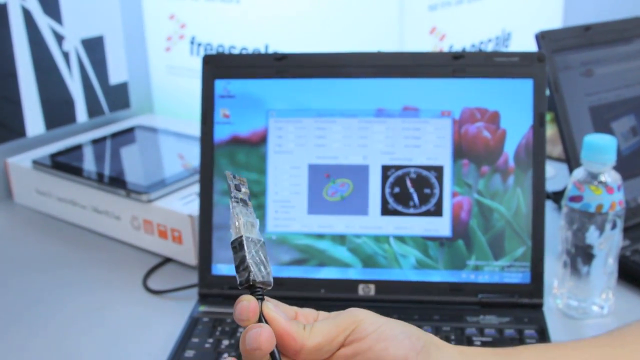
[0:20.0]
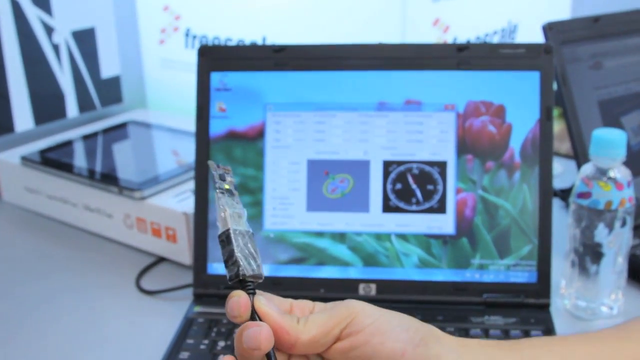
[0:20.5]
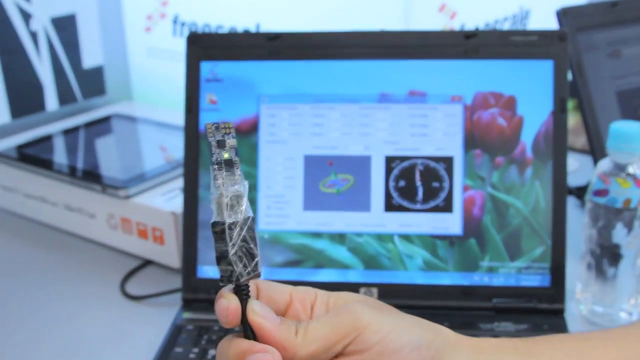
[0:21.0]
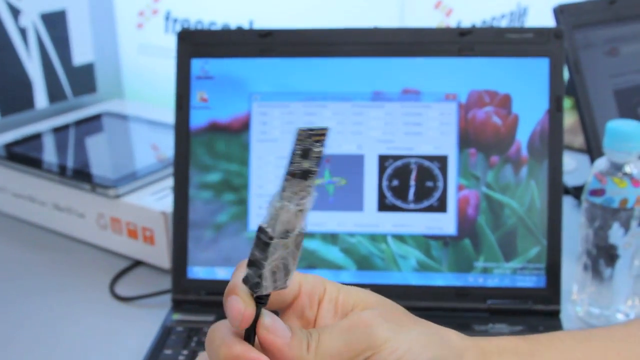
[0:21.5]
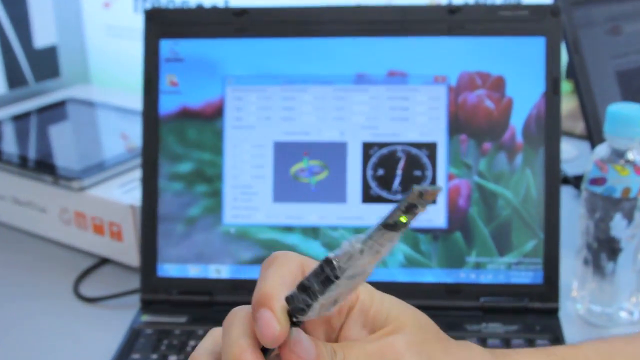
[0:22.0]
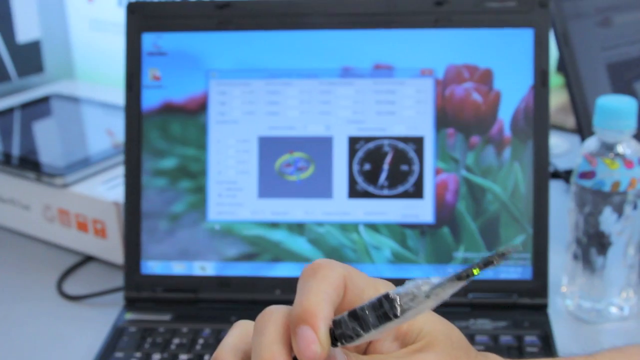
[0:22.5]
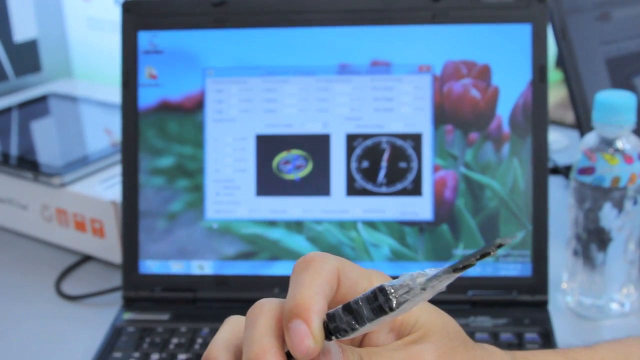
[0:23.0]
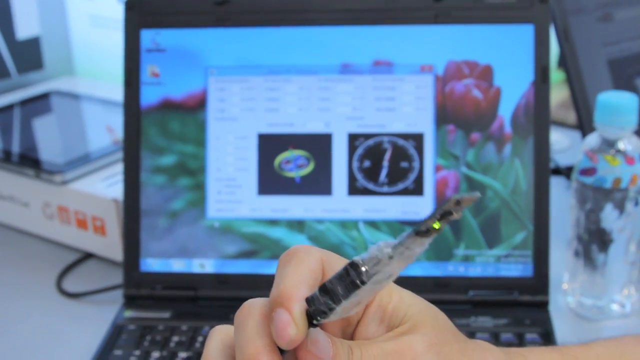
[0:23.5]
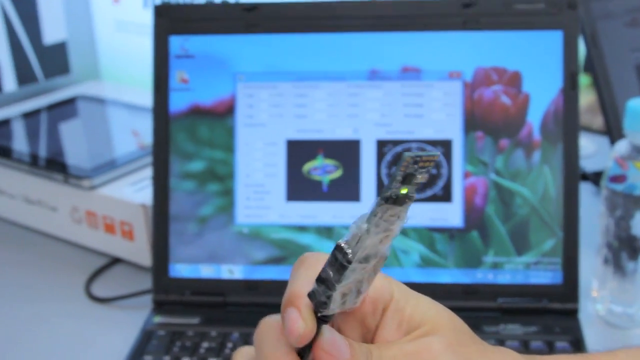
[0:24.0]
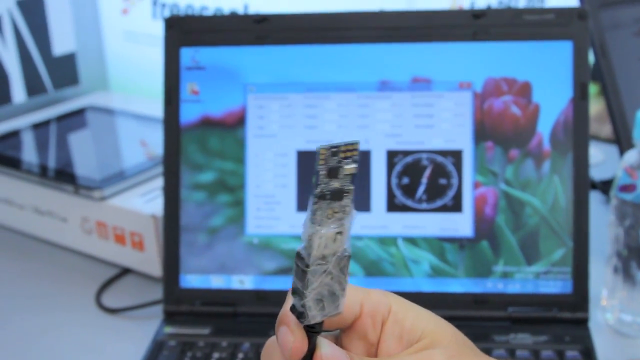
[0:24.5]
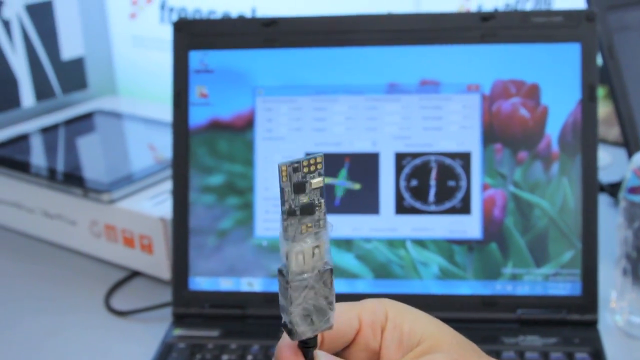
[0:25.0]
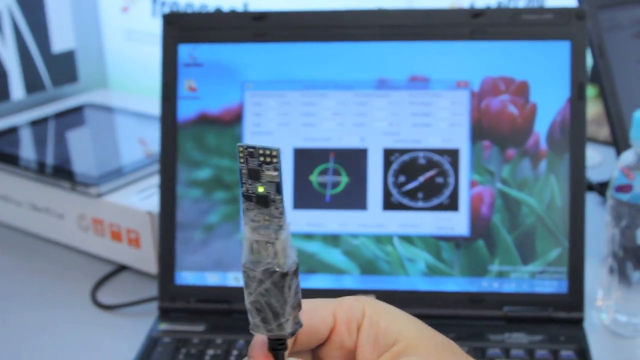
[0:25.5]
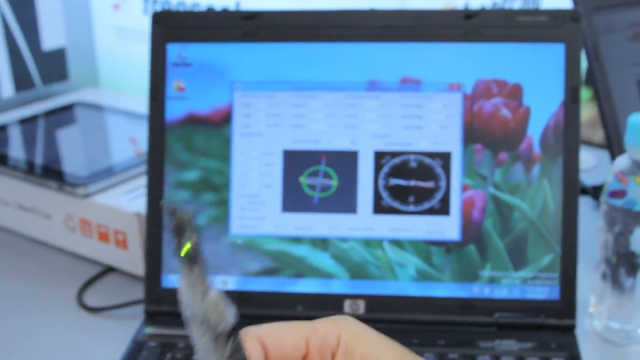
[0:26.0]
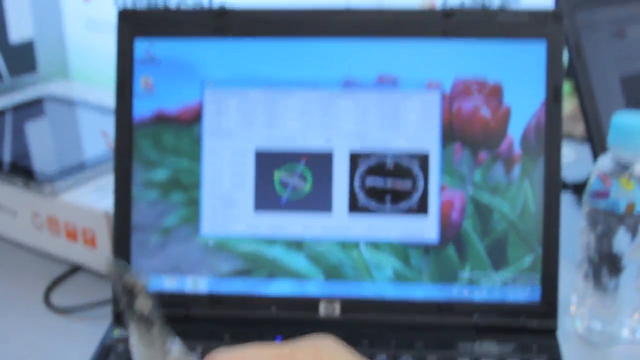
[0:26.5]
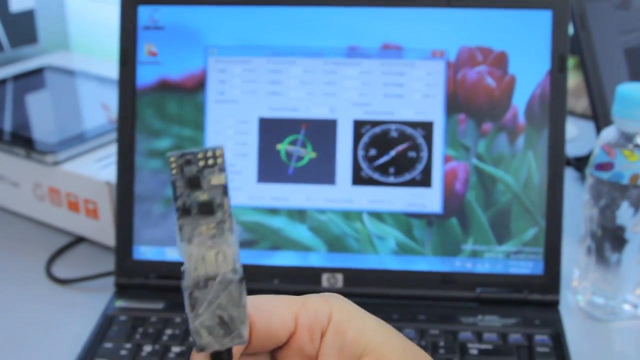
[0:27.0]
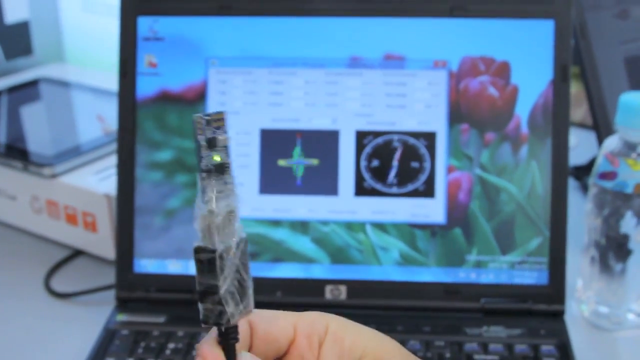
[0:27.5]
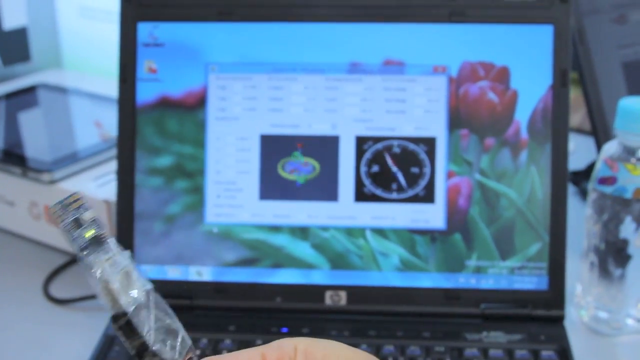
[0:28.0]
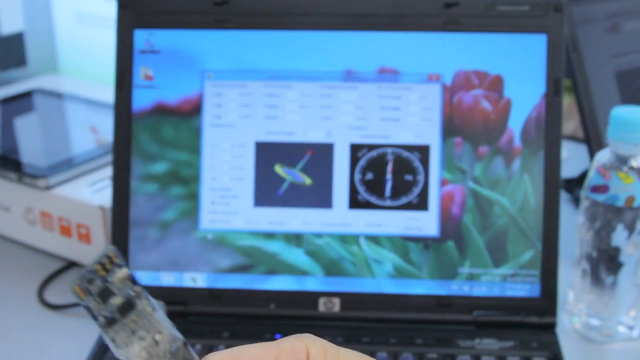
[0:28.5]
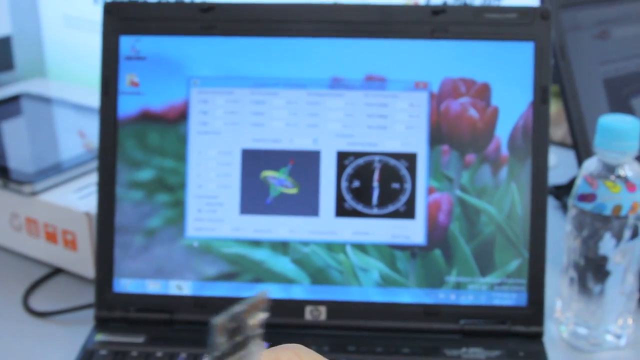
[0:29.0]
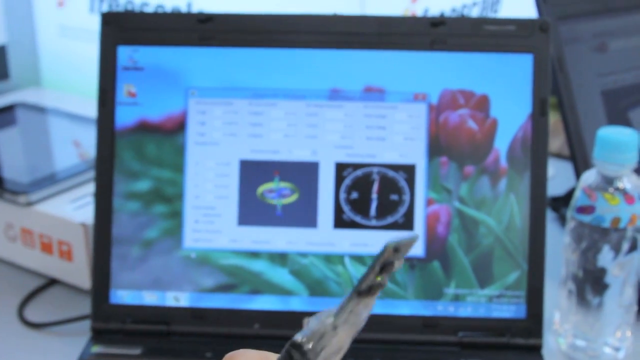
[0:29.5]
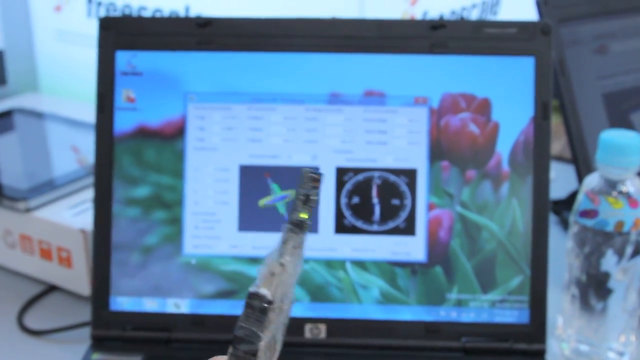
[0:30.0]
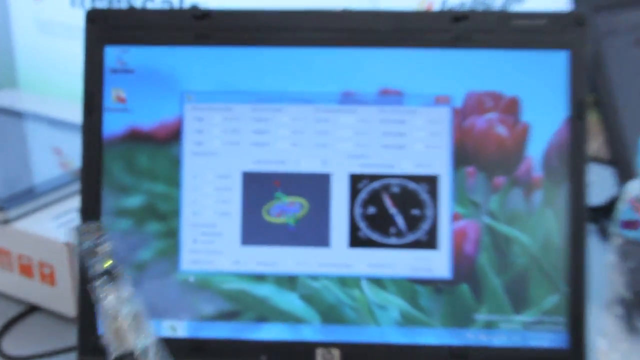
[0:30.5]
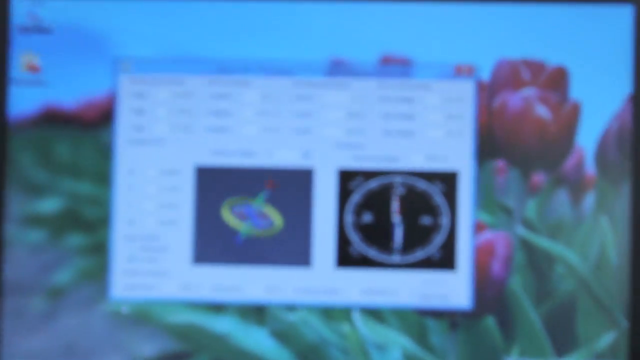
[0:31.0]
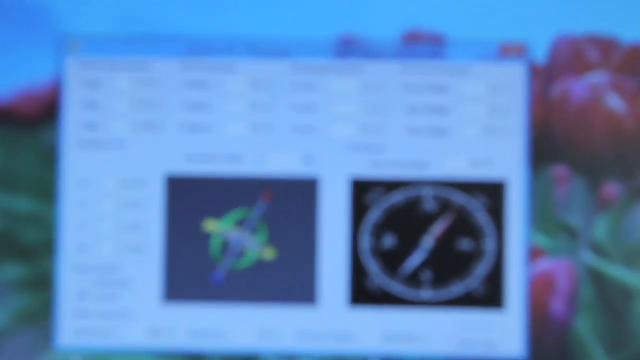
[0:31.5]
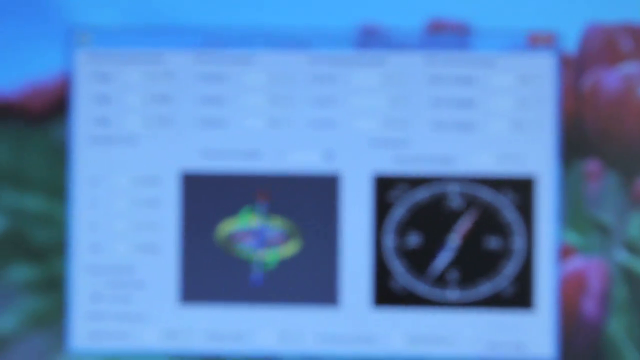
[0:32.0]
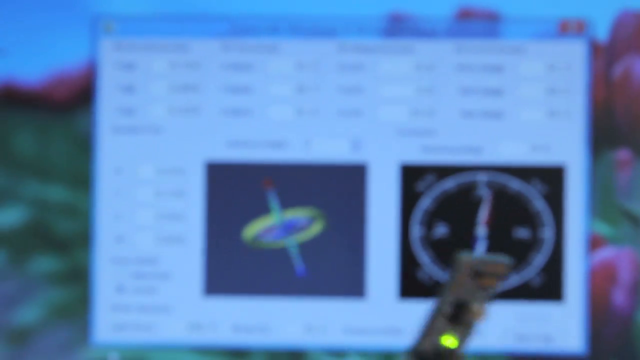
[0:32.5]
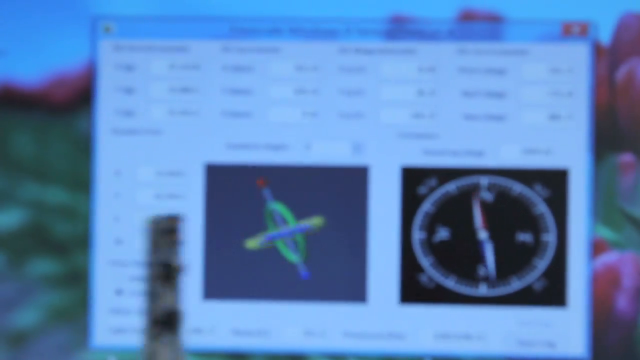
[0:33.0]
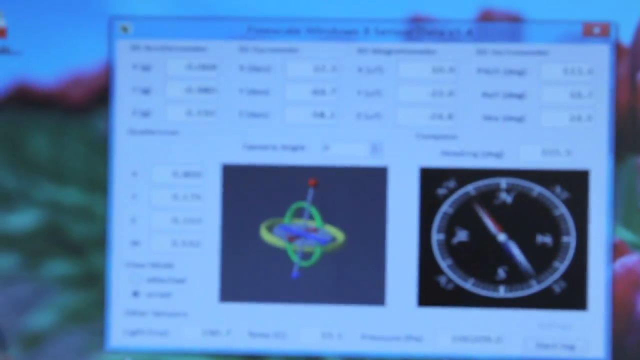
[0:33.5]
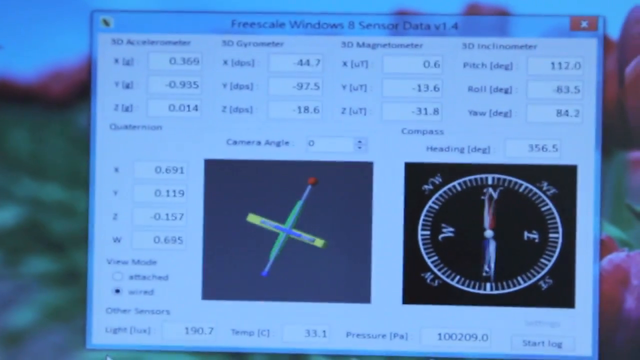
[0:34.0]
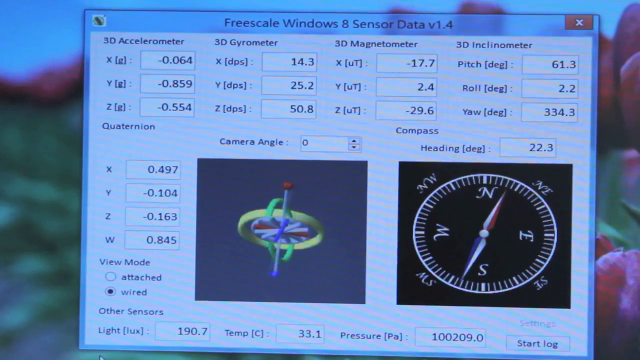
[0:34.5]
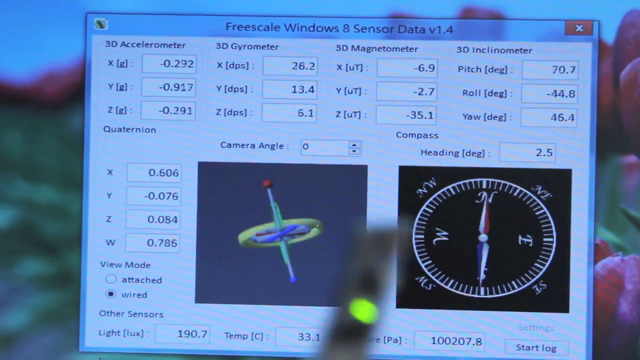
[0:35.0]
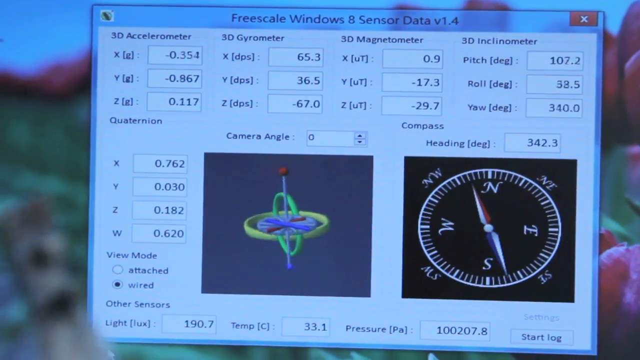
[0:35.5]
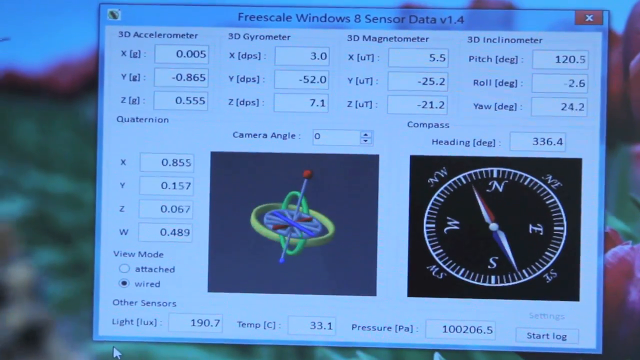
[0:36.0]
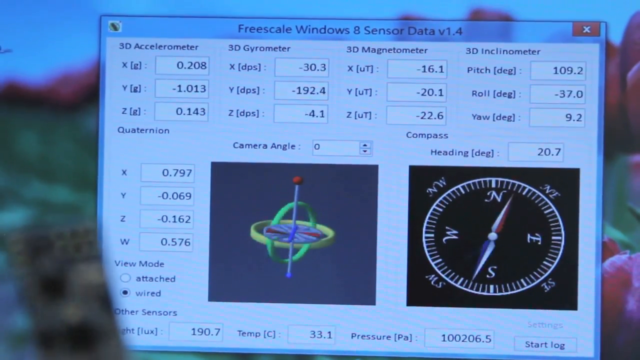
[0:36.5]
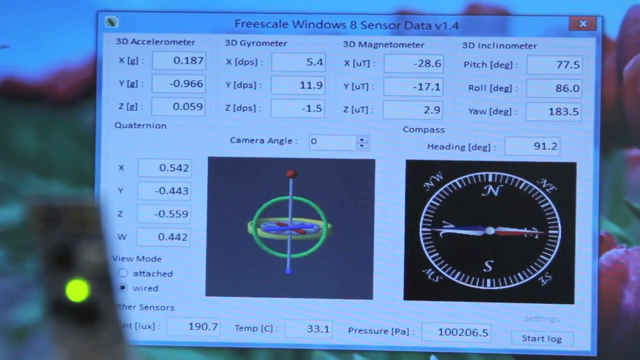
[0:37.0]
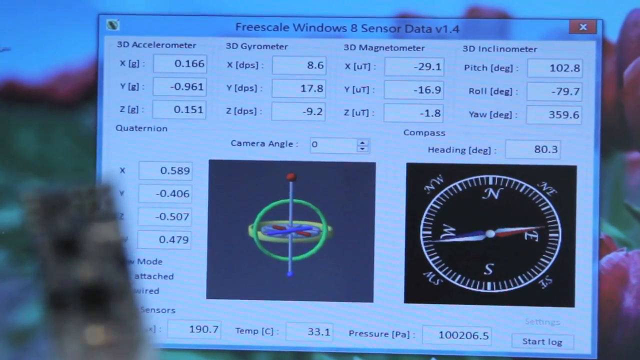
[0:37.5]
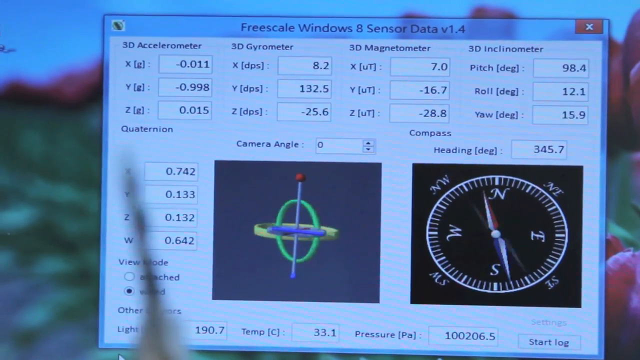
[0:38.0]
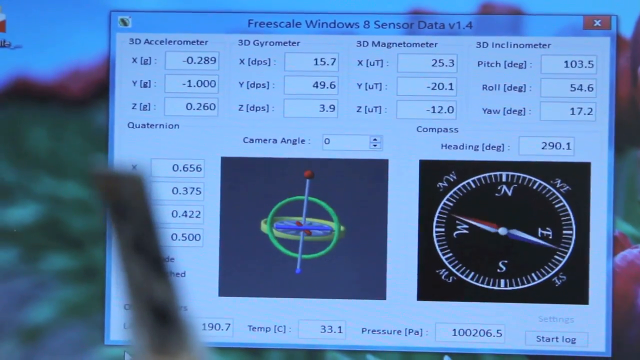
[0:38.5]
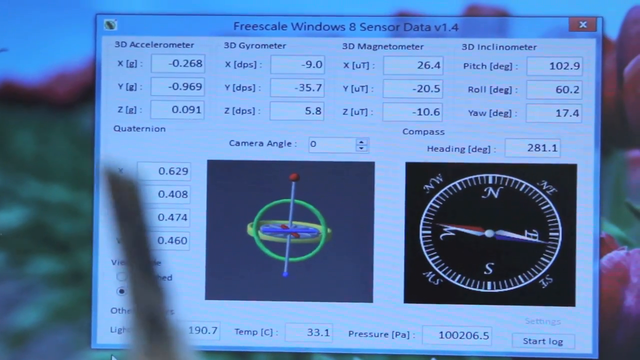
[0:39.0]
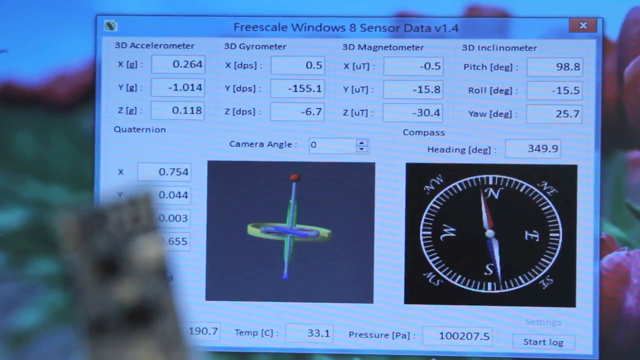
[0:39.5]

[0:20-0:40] Two laptops are on a table in the background with a water bottle between them. The desktop of the laptop closest to the camera has tulips on it. A man's hand holds a computer chip attached to a wire, holding the base of the chip in the wire. He rotates the chip to the right, showing its side profile to the camera, then spins it clockwise to show the other side. He then spins it counterclockwise, and the laptop monitor shows the live reaction: as he spins it, the gyroscopes and the compass on the right rotate, showing the motion of the chip. The fingers holding the chip appear to manipulate it proudly, as if it is of great value or an accomplishment.